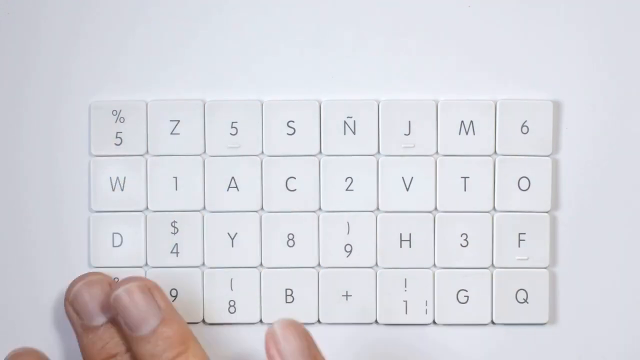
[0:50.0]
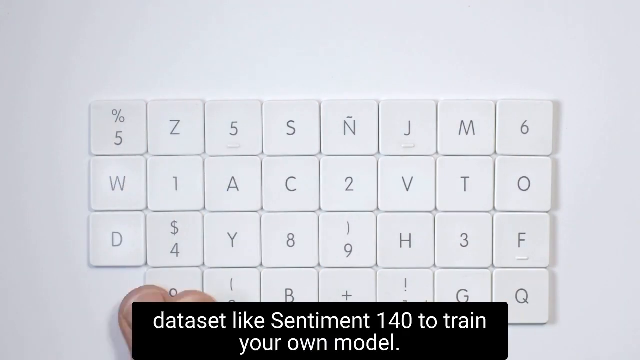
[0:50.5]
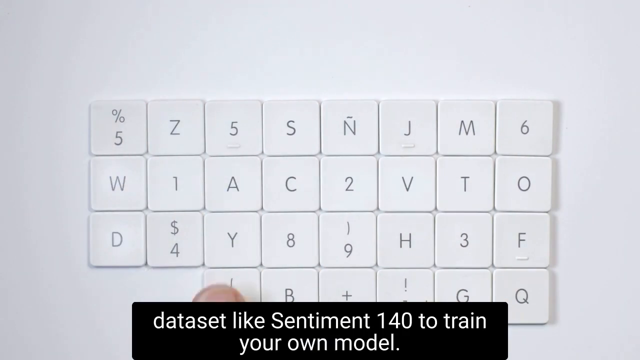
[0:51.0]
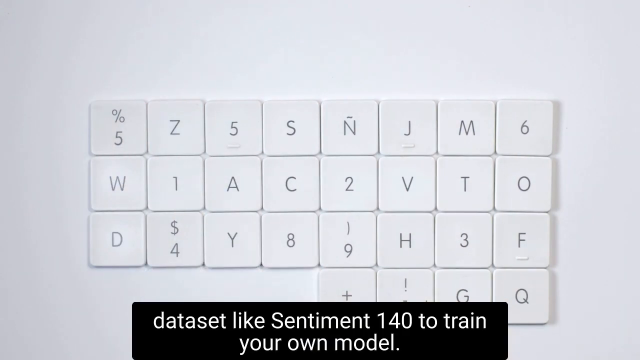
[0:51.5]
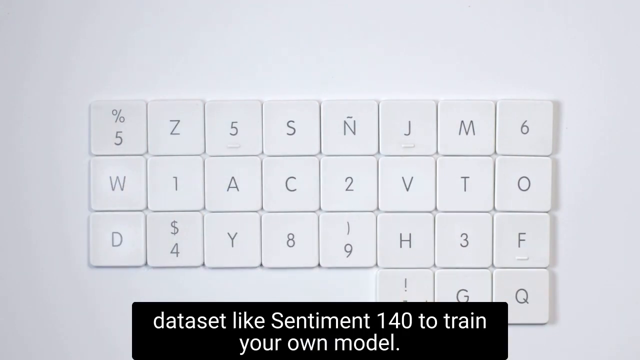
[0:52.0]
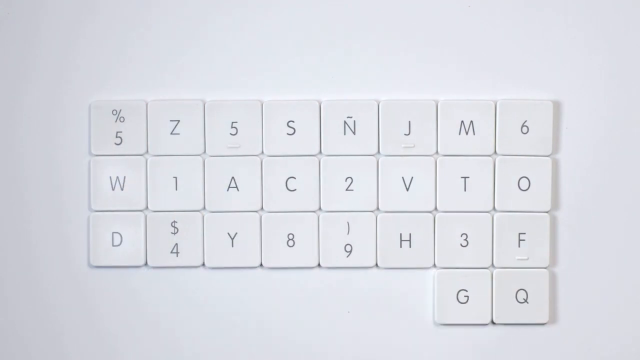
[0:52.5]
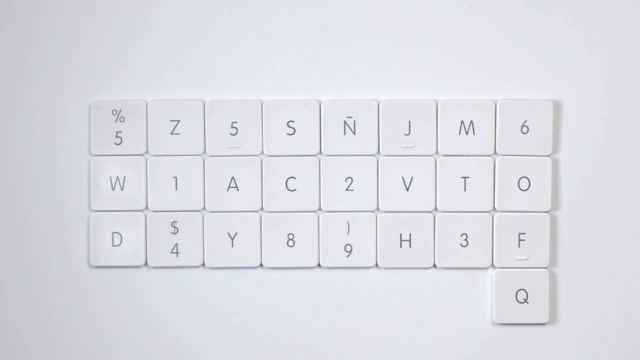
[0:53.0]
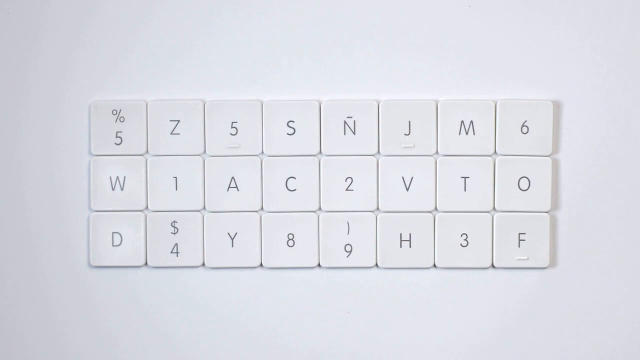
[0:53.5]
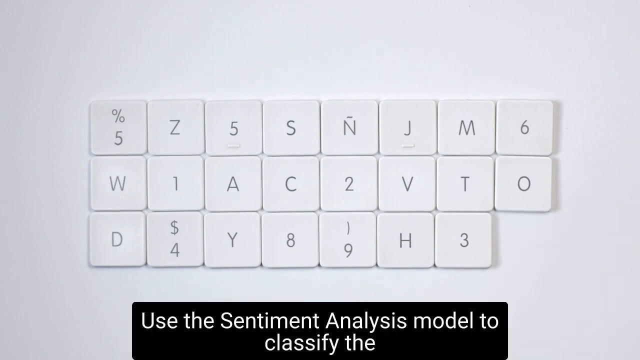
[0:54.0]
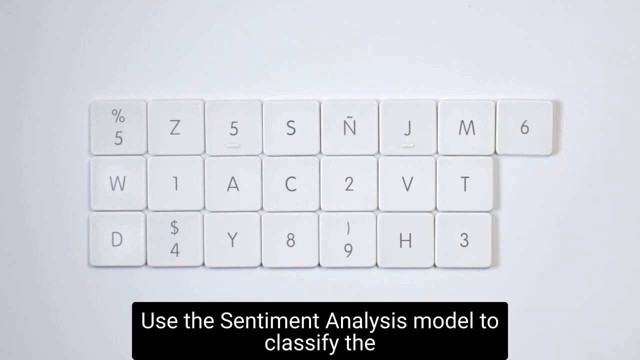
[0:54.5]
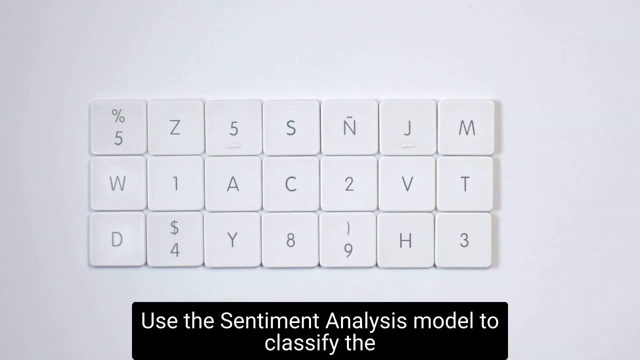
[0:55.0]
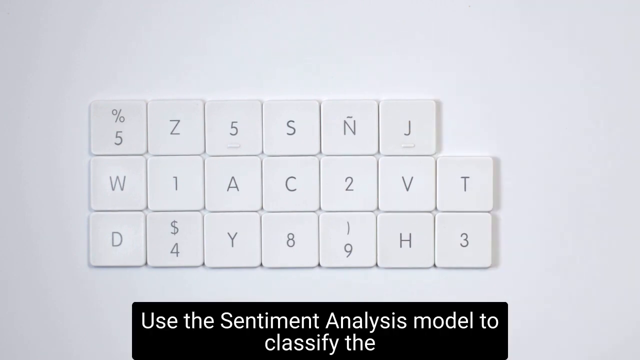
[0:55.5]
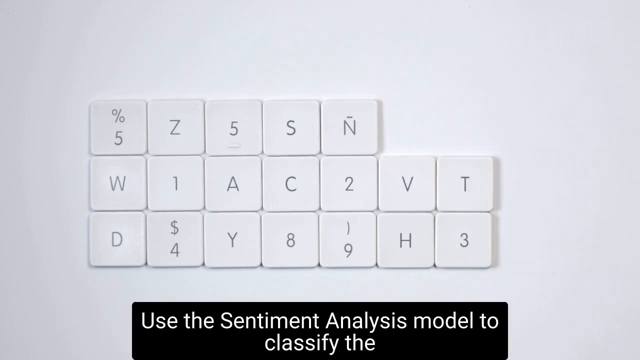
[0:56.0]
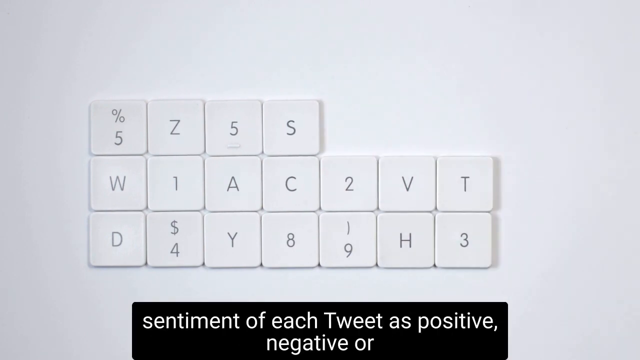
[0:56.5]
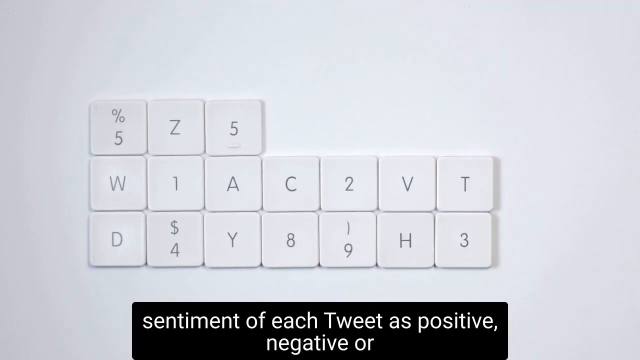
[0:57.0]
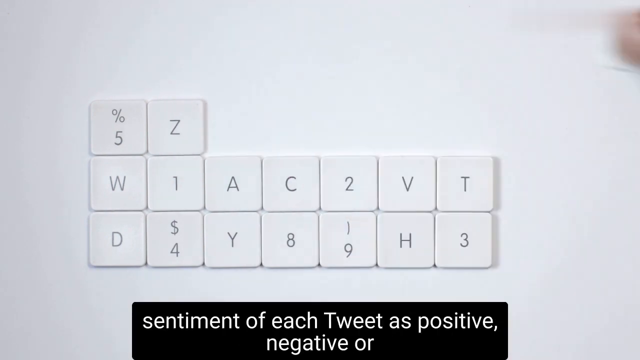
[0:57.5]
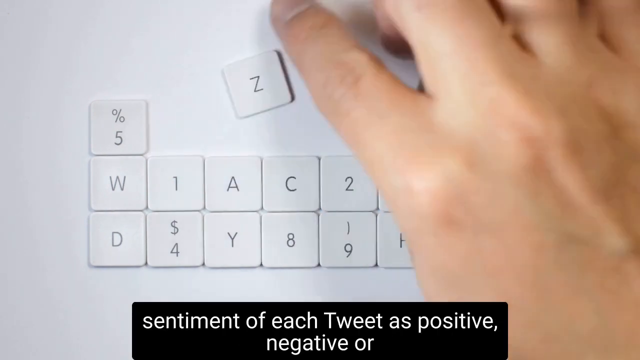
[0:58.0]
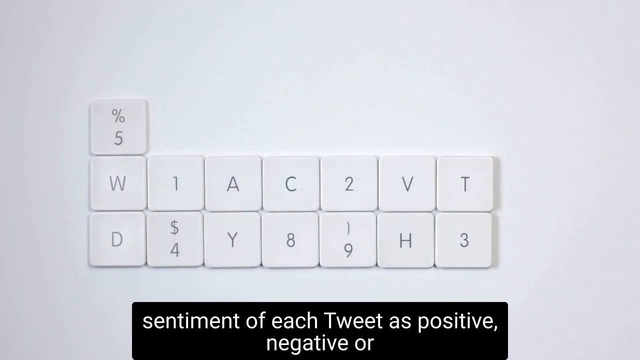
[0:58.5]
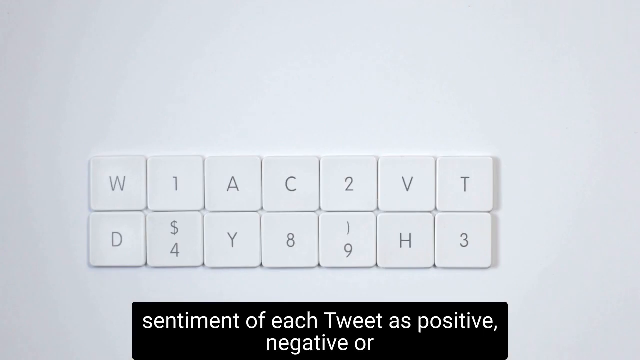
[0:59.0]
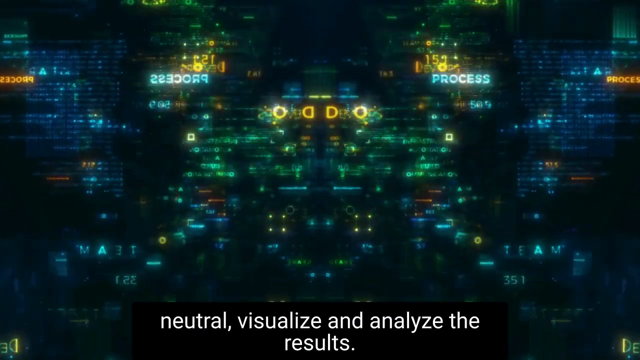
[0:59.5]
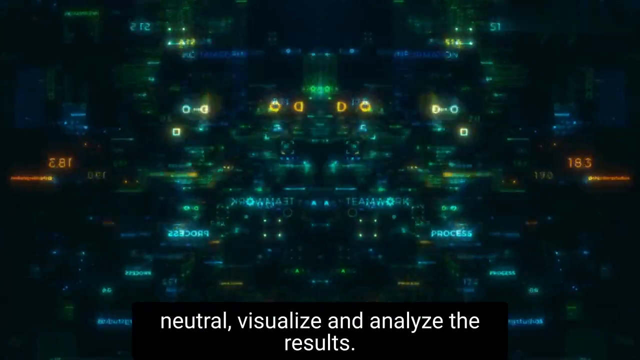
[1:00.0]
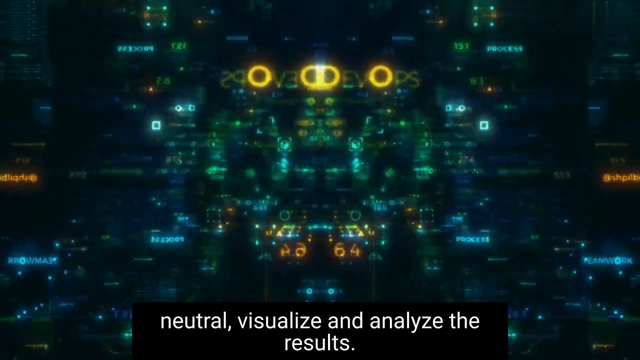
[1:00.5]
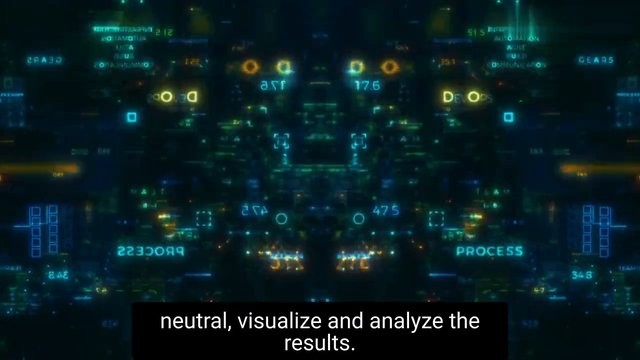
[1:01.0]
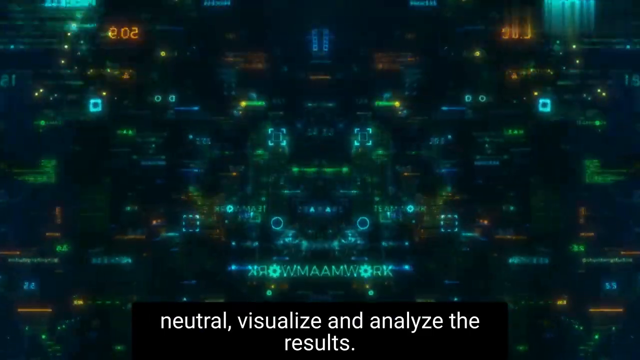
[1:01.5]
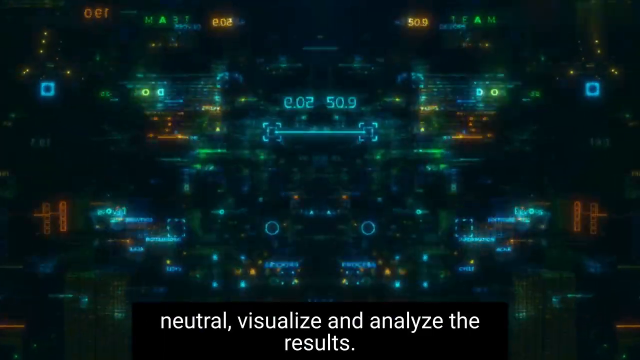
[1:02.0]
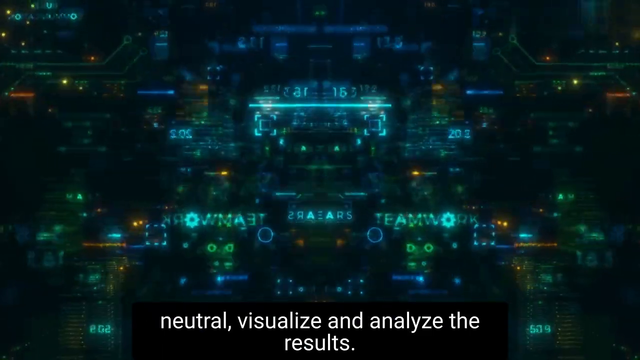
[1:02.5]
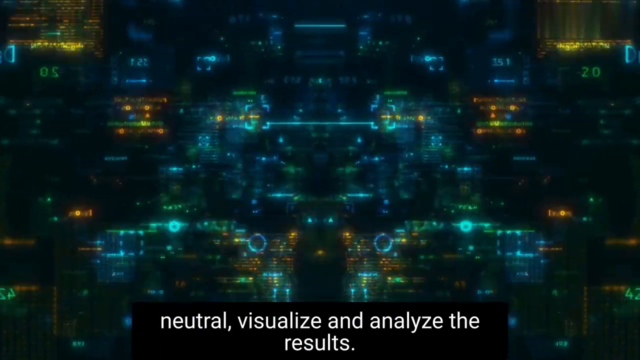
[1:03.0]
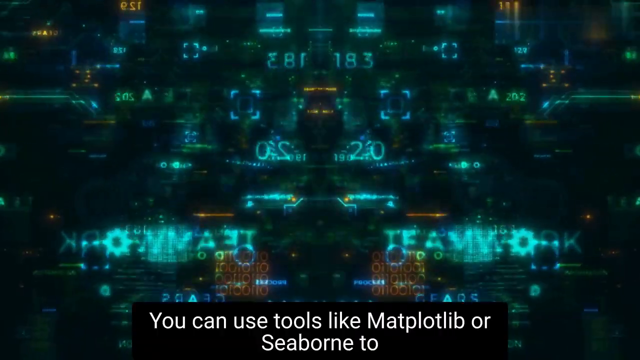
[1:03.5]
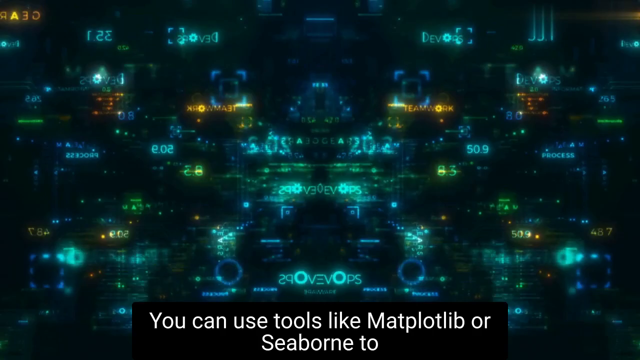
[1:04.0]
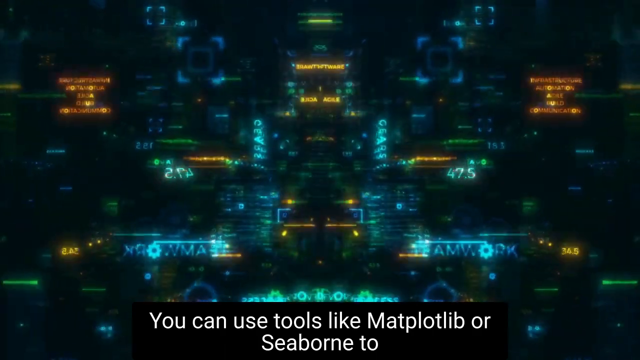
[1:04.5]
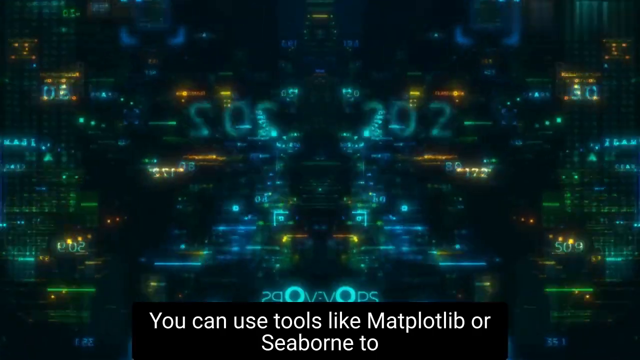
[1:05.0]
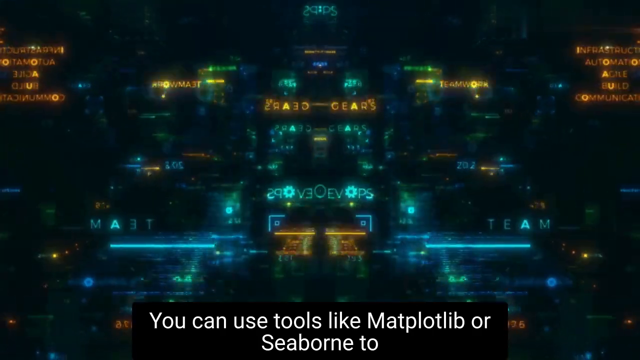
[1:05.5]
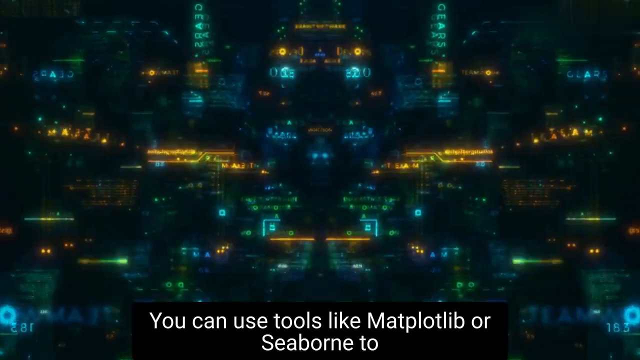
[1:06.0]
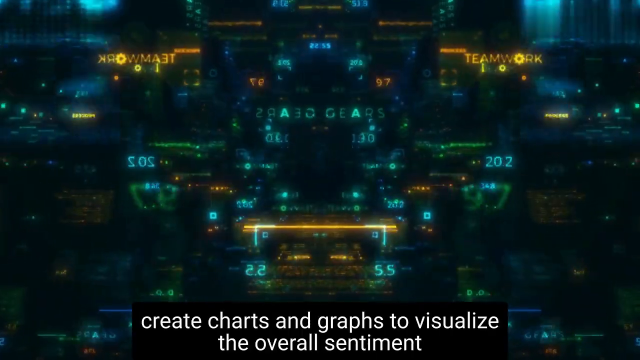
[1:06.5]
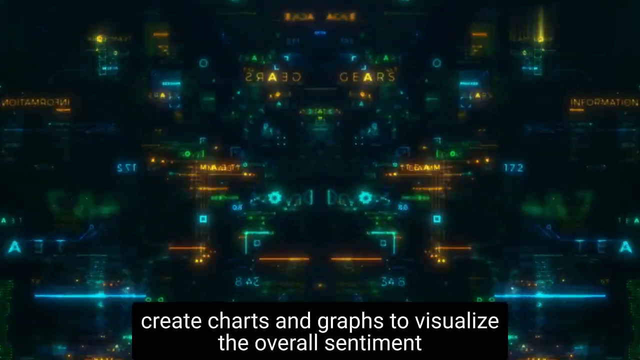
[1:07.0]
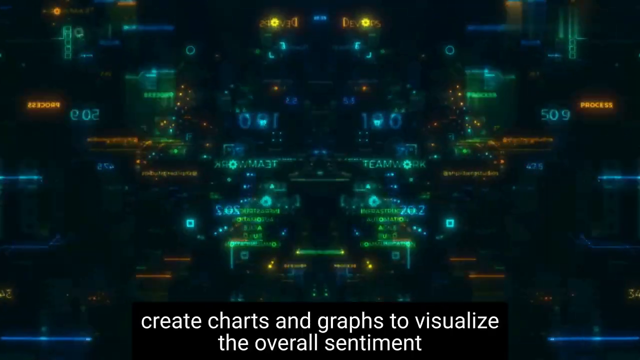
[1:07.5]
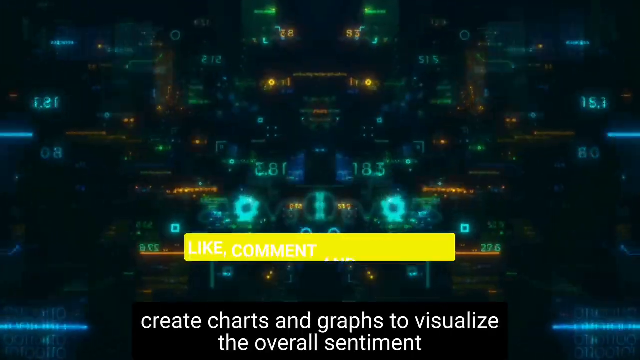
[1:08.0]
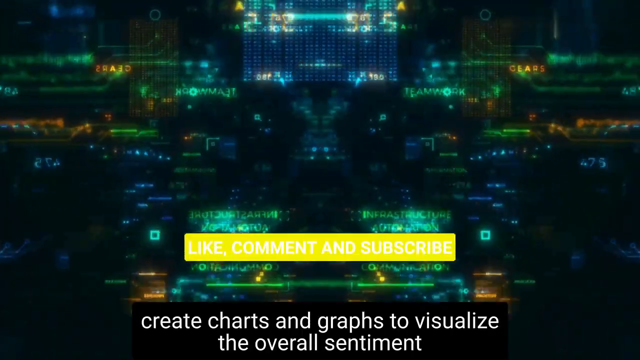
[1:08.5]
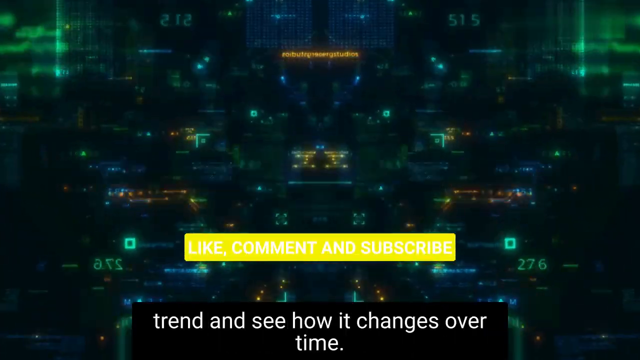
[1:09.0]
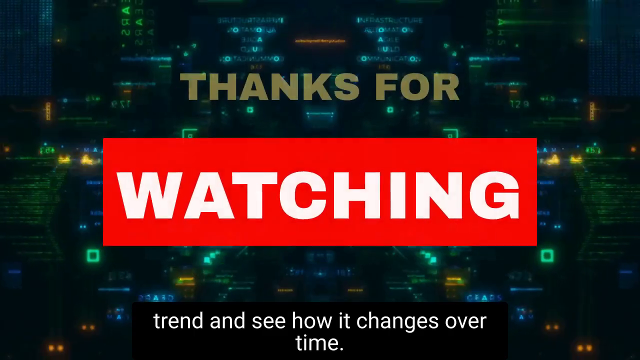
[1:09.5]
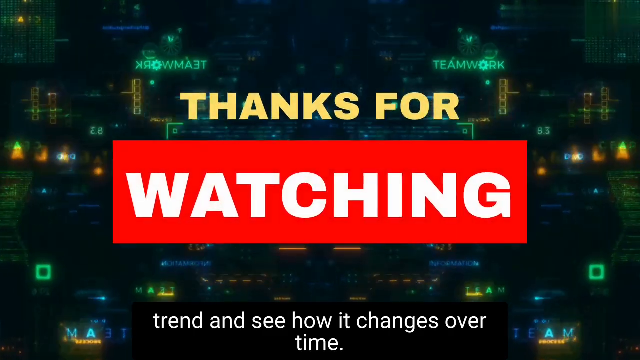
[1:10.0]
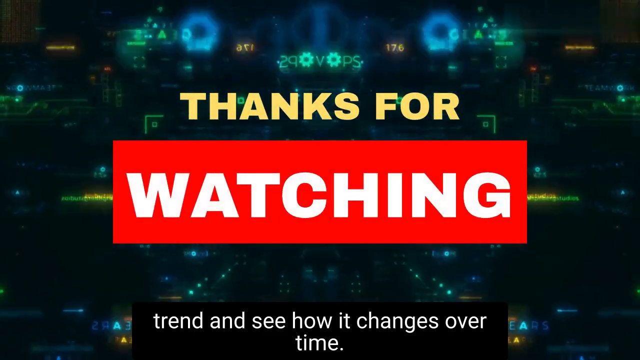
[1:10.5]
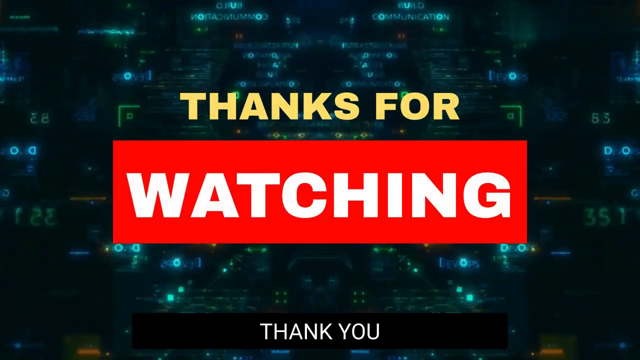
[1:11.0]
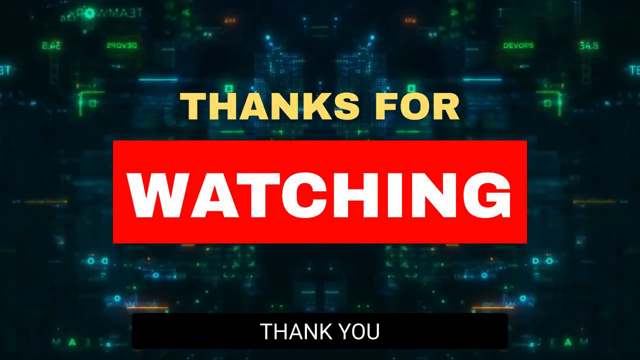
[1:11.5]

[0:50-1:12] The white background with tiles returns, now down to three rows of eight columns. A white hand starts removing tiles from the right column, then from the top row. The scene changes to a computer graphic that comes out toward the viewer, made up of numbers in white, green, and blue. A red box with white lettering reads "watching," and at the top are the words "thank you." Black text boxes at the bottom read "use the sentiment analysis model to classify the sentiment of each tweet" and "visualize and analyze results. You can use tools like matplotlib or seaborn to create charts and graphs to visualize the overall sentiment and trends and see how it changes over time."